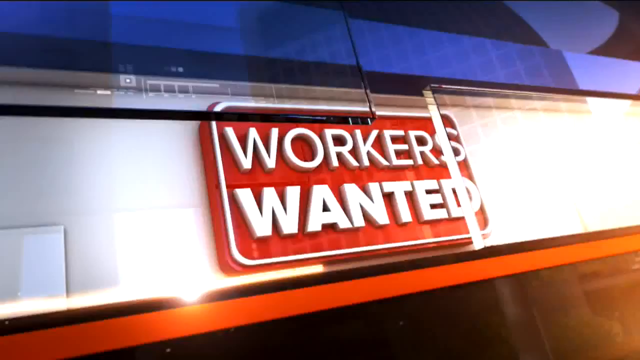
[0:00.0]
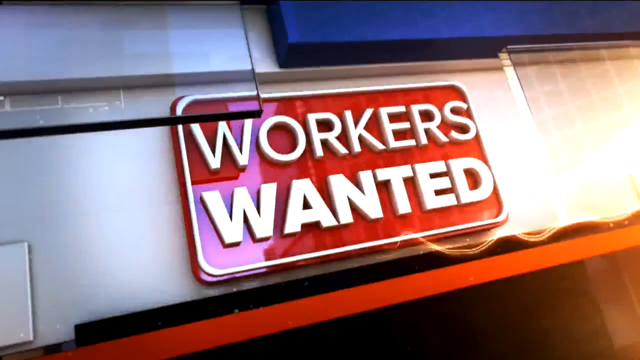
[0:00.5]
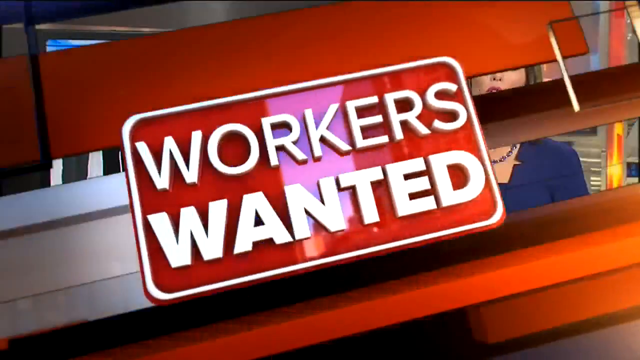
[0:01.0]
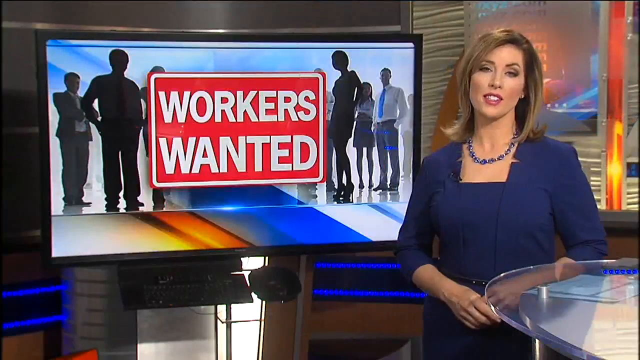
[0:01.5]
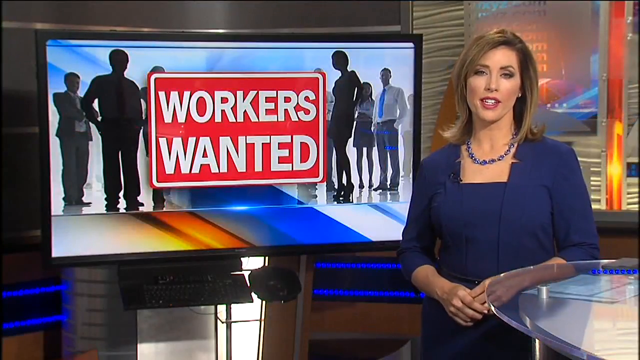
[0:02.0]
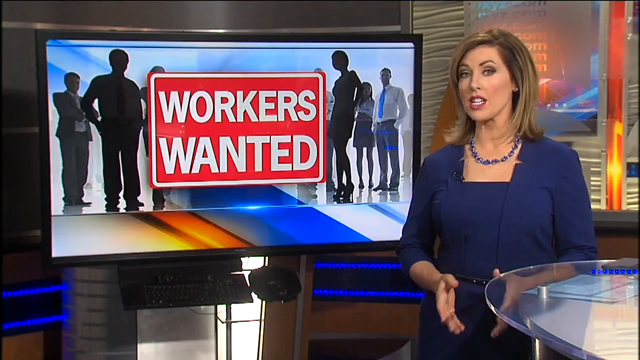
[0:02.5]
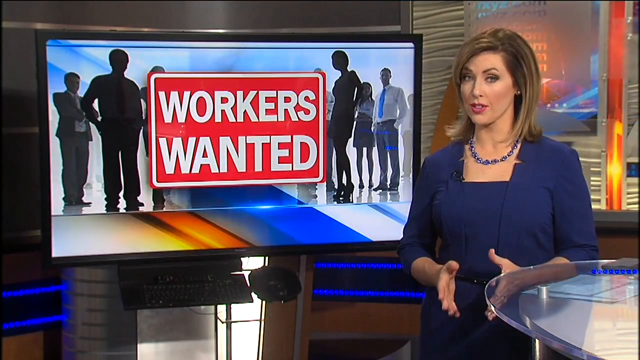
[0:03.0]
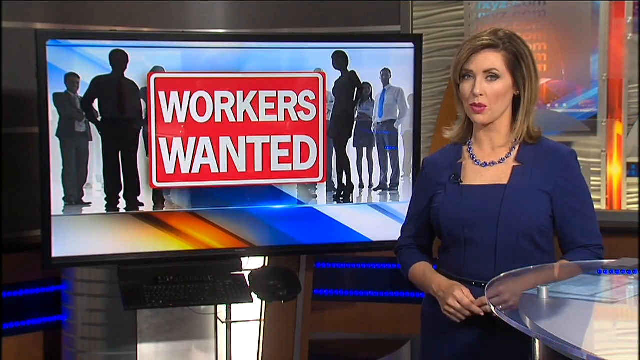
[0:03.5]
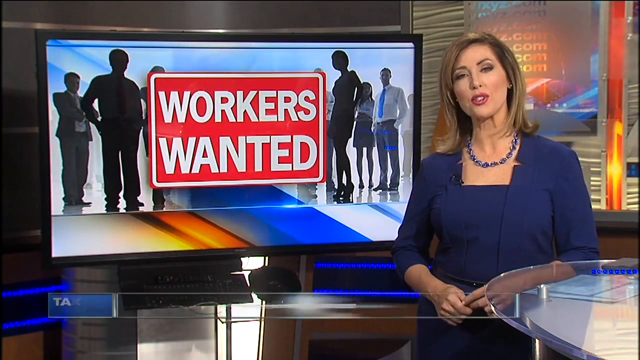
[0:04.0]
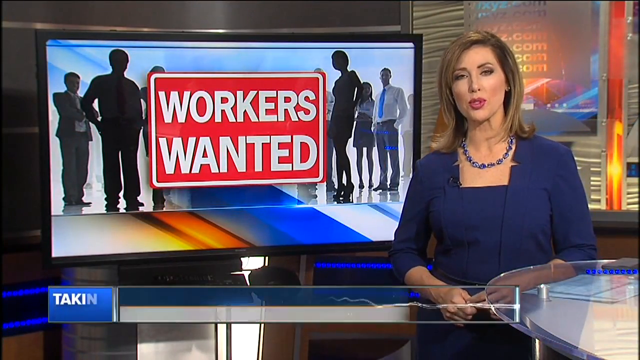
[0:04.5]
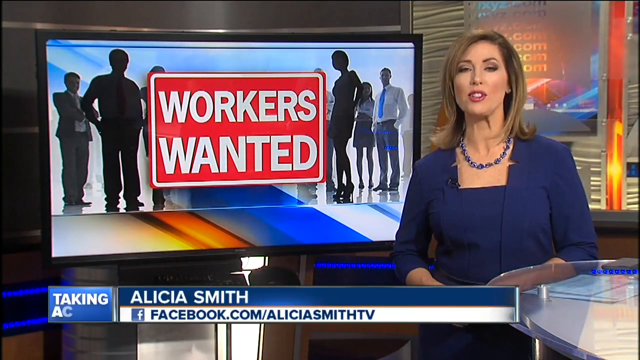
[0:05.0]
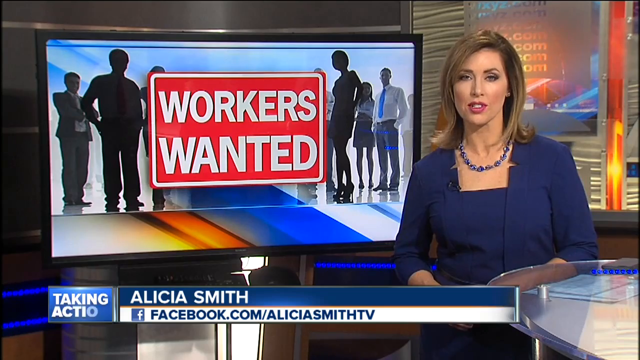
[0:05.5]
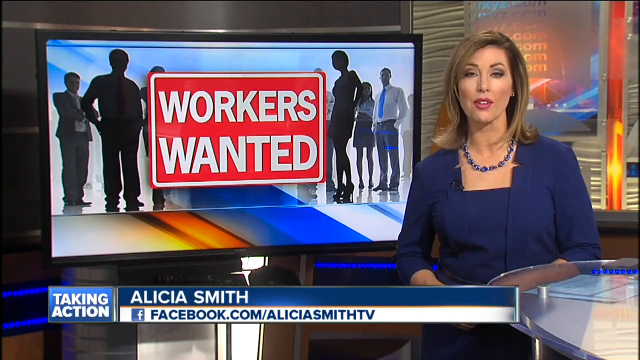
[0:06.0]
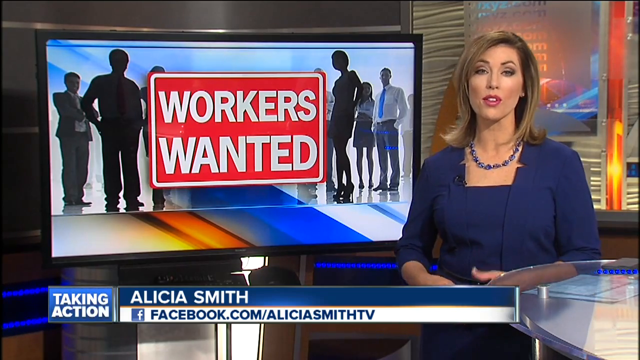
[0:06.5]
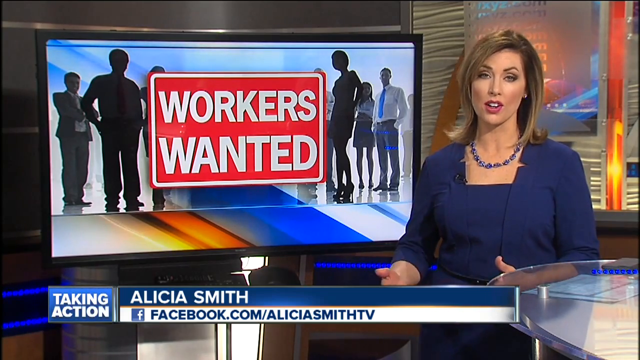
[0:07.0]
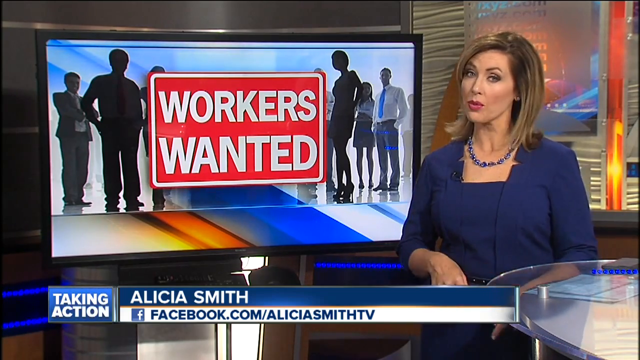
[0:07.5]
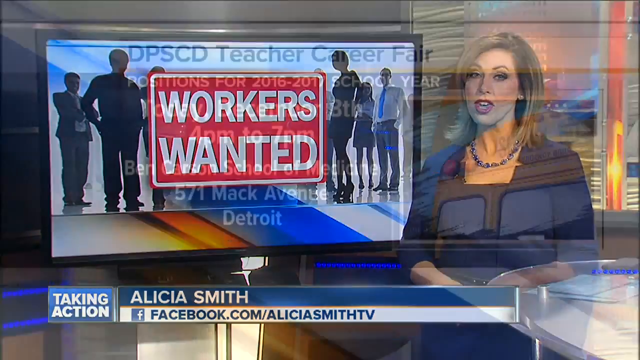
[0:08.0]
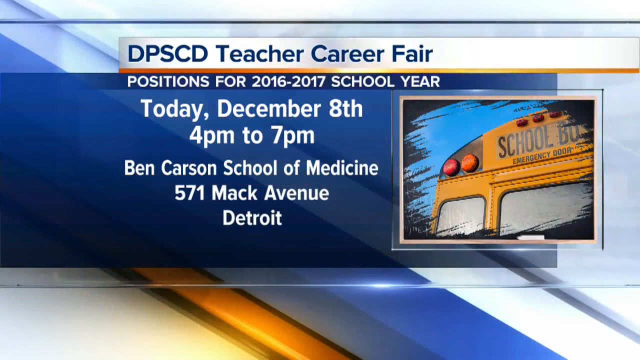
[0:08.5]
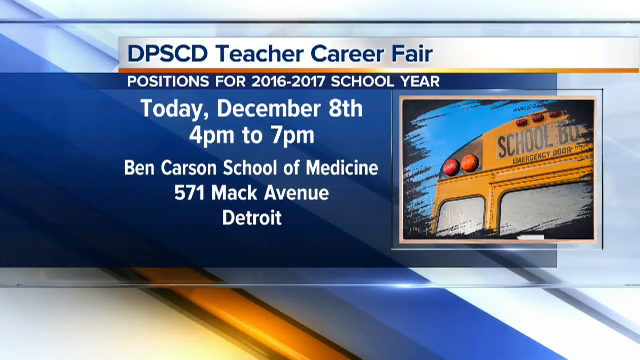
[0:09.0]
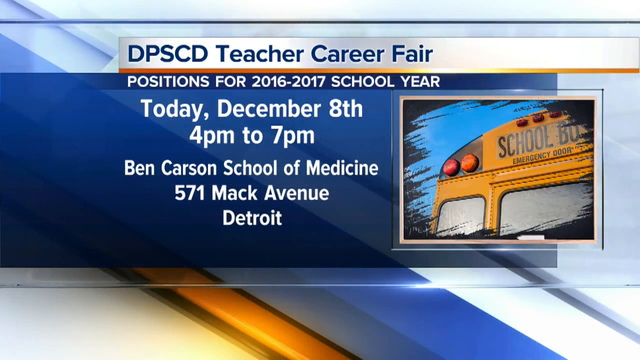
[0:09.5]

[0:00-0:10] A "workers wanted" text screen appears before the video transitions to a woman, Alicia Smith, who has kind of short brown hair, a blue necklace and a kind of blue shirt, is probably around 40, and wears sort of reddish-pink lipstick. Her Facebook page is shown in a "workers wanted" style screen, with a news-style studio behind her. The screen then reads "DPSCD teacher's career fair positions for 2016 to 17 school year today December 8th 4 p.m to 7 p.m Ben Carson School of Medicine 571 Mac Avenue Detroit," and the school is sort of depicted. A "workers wanted" transition screen appears before the segment ends.